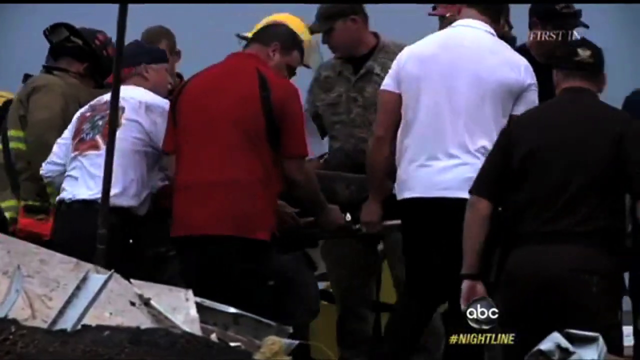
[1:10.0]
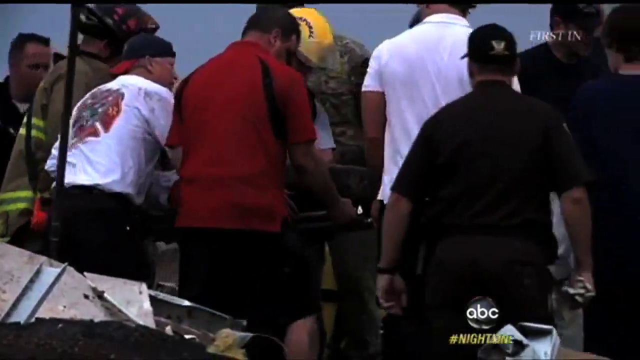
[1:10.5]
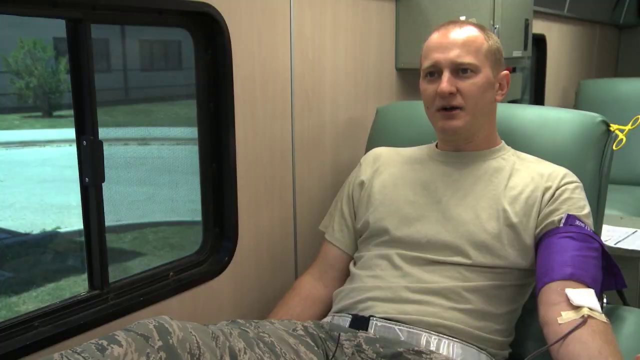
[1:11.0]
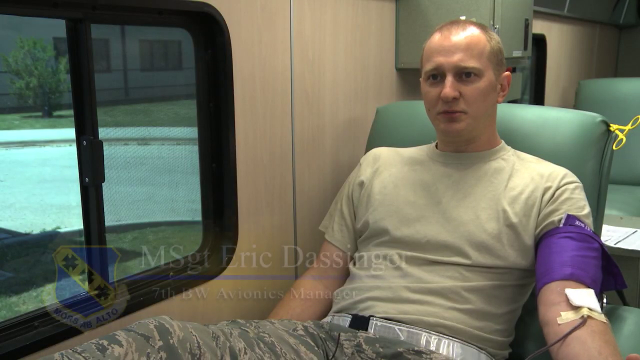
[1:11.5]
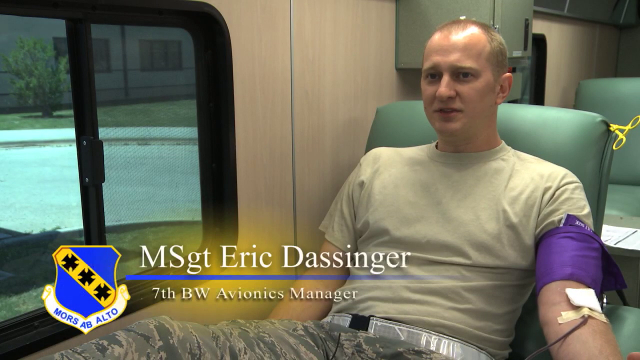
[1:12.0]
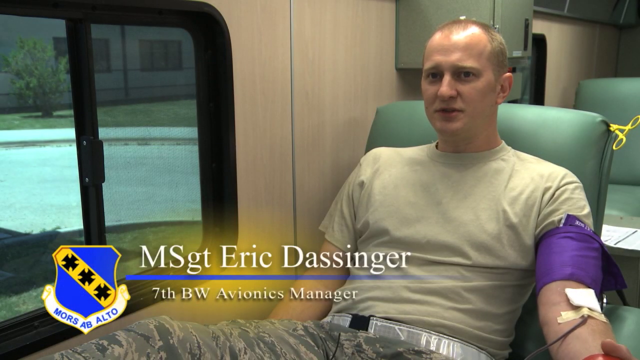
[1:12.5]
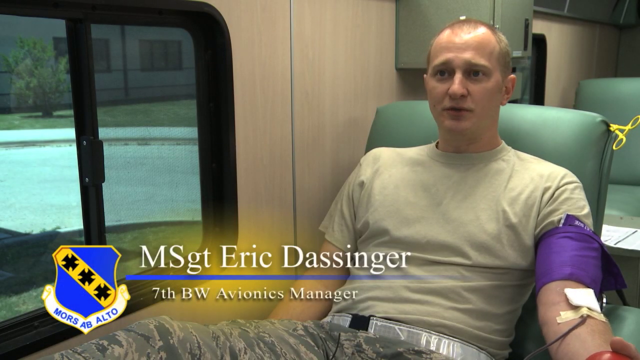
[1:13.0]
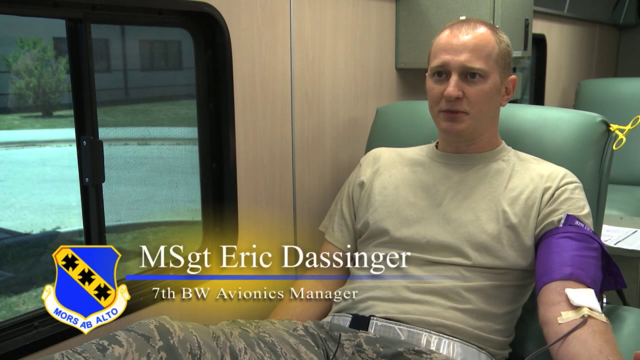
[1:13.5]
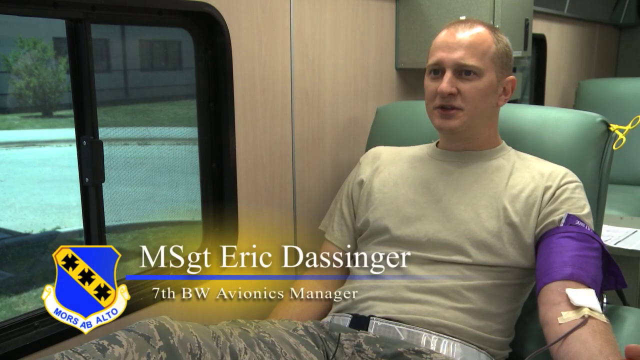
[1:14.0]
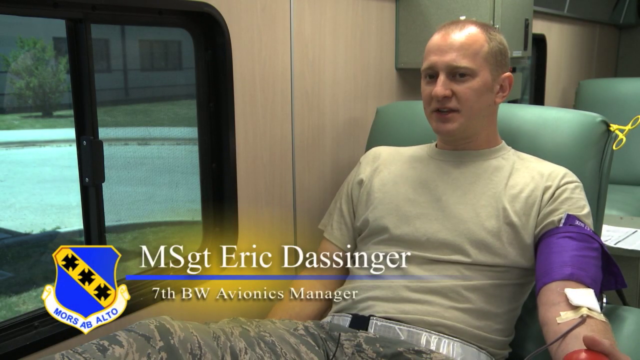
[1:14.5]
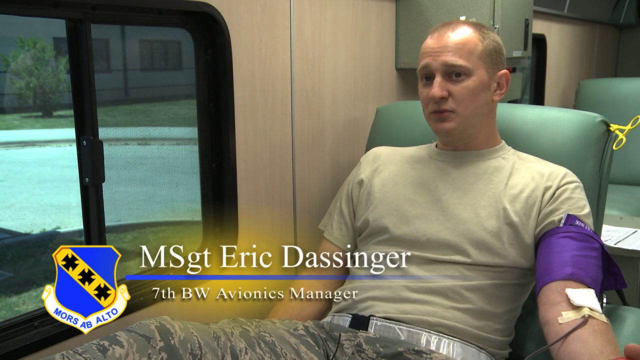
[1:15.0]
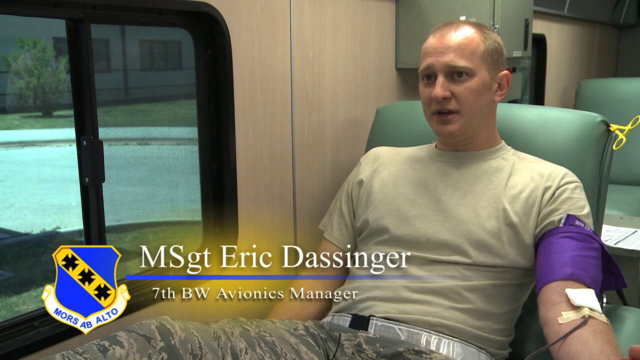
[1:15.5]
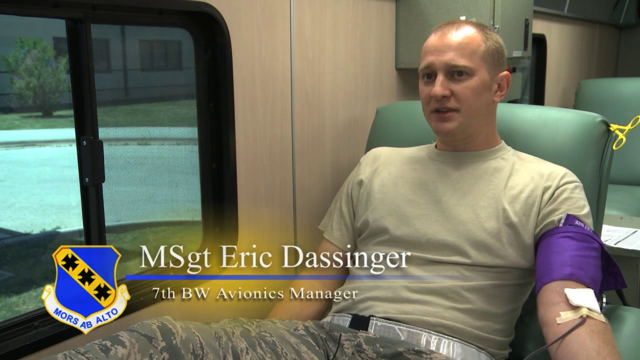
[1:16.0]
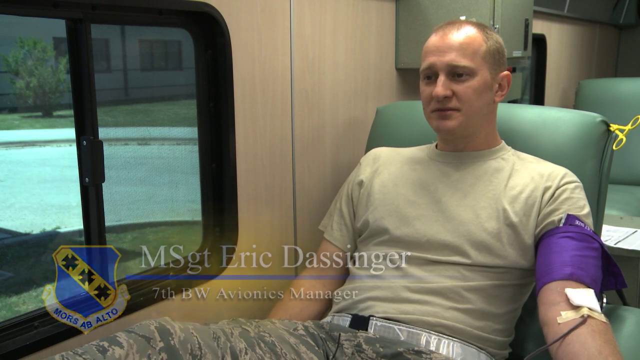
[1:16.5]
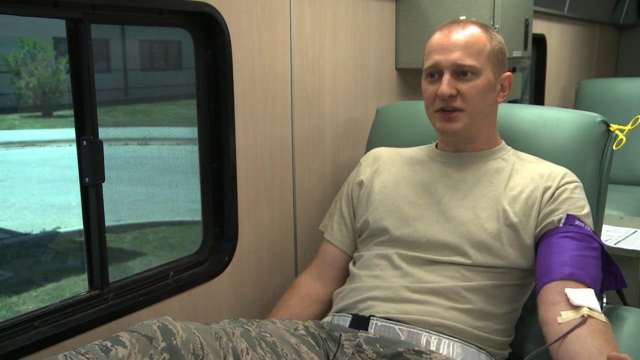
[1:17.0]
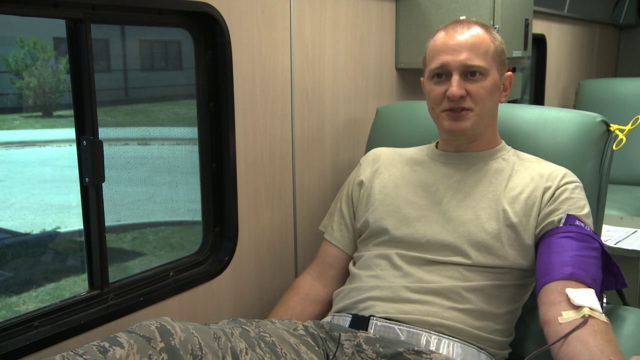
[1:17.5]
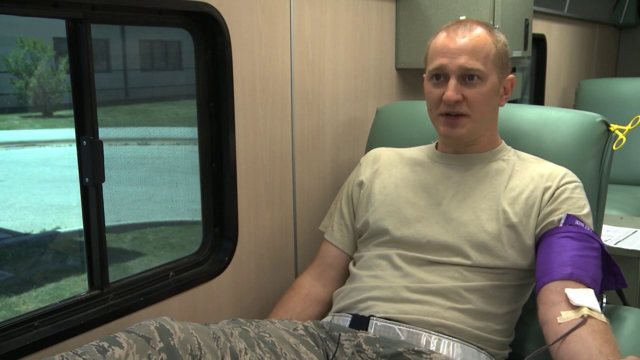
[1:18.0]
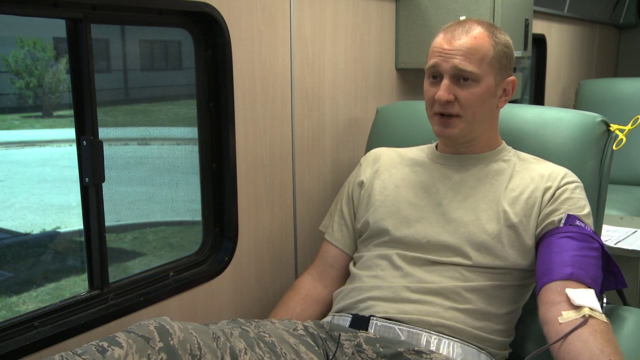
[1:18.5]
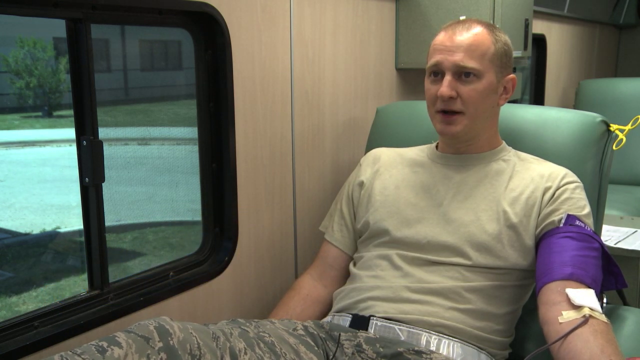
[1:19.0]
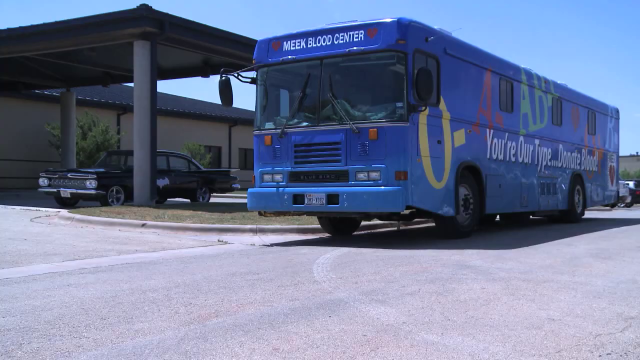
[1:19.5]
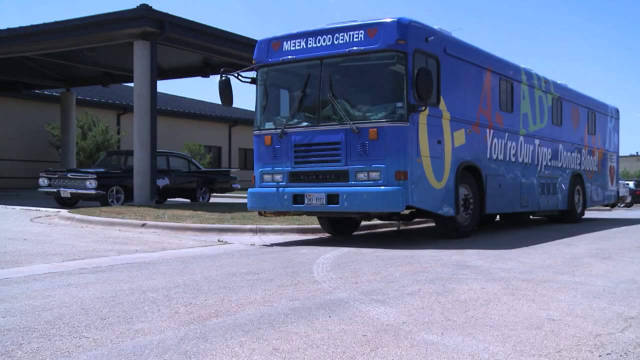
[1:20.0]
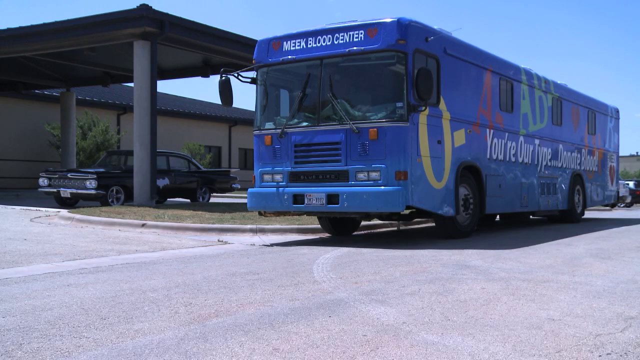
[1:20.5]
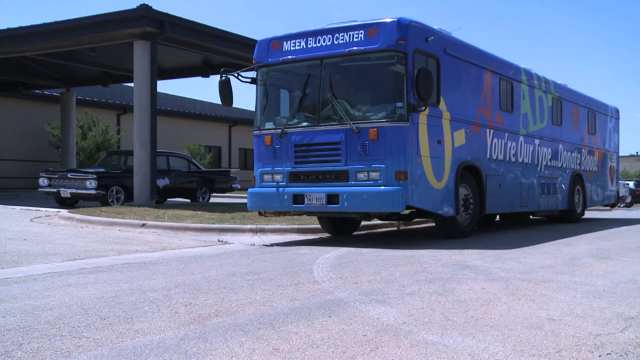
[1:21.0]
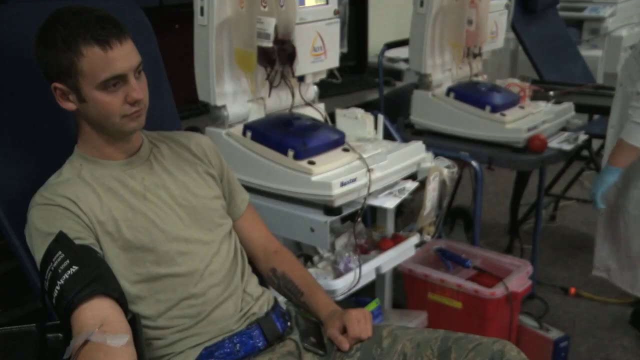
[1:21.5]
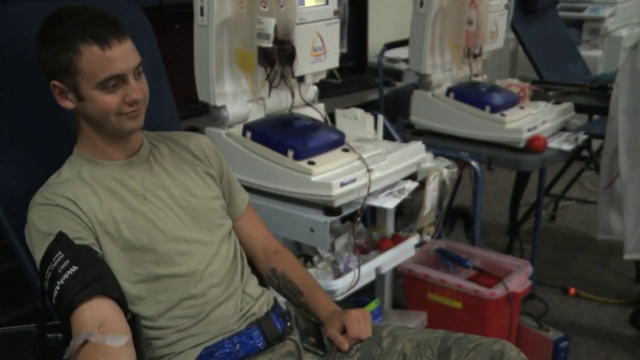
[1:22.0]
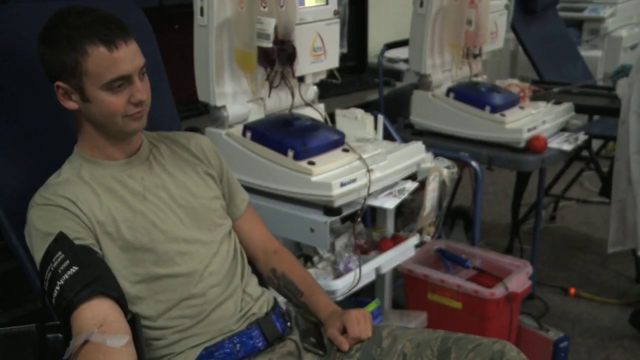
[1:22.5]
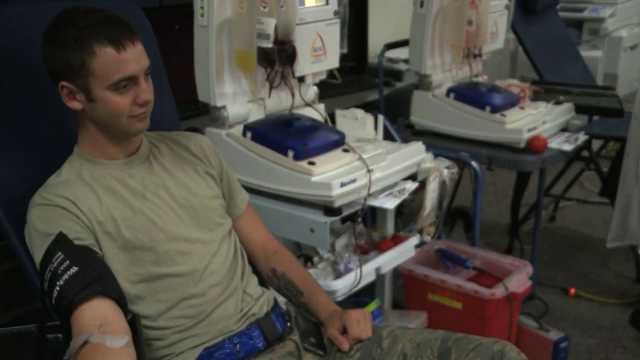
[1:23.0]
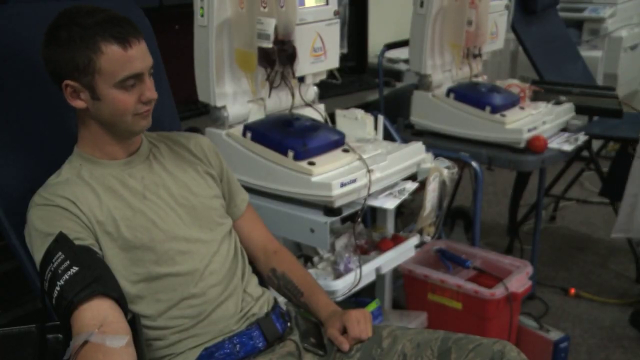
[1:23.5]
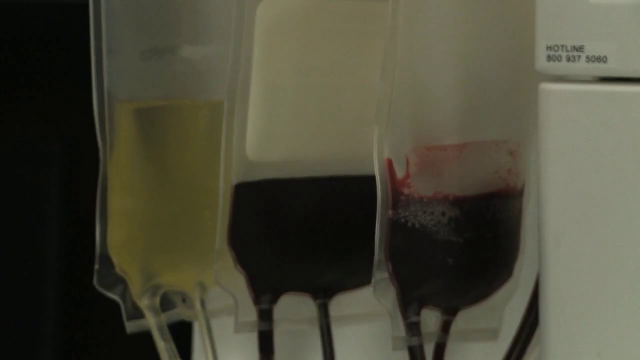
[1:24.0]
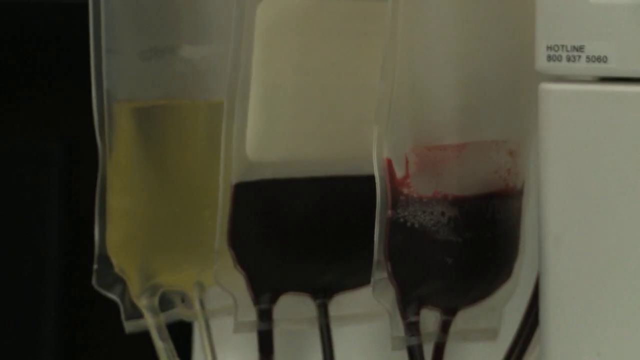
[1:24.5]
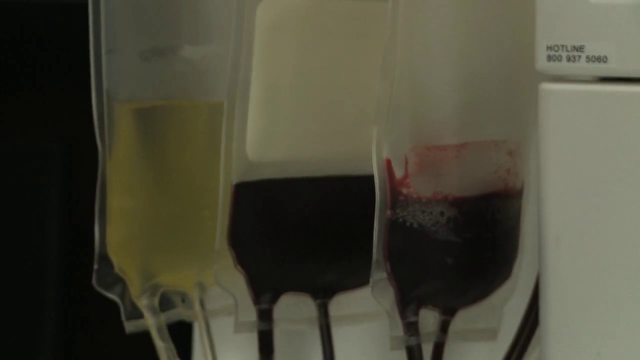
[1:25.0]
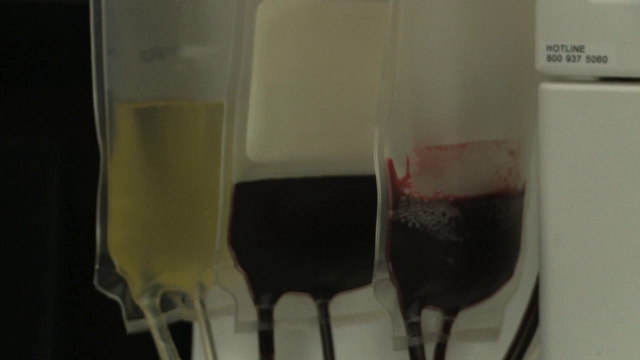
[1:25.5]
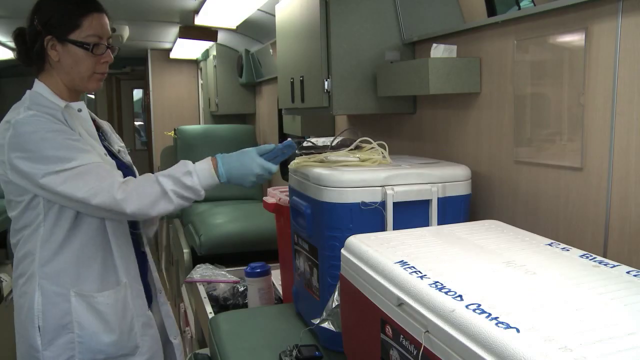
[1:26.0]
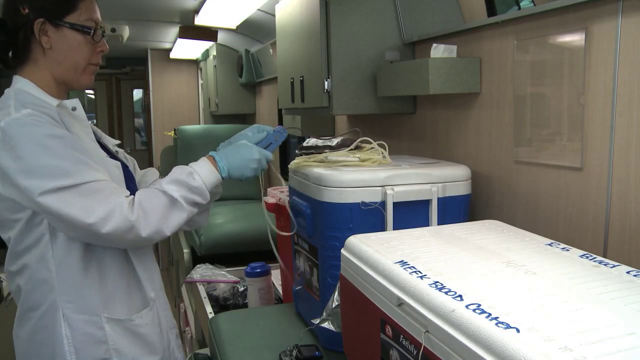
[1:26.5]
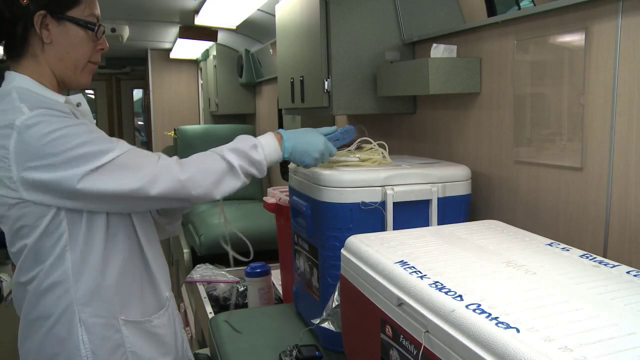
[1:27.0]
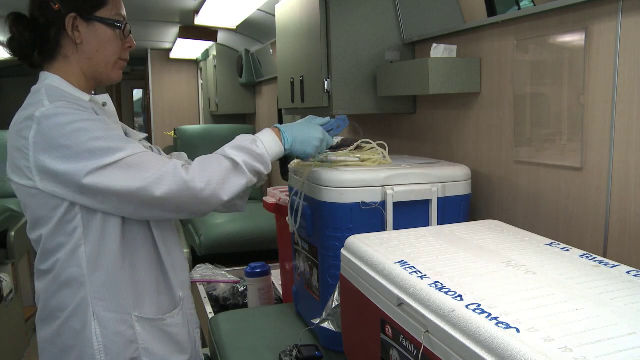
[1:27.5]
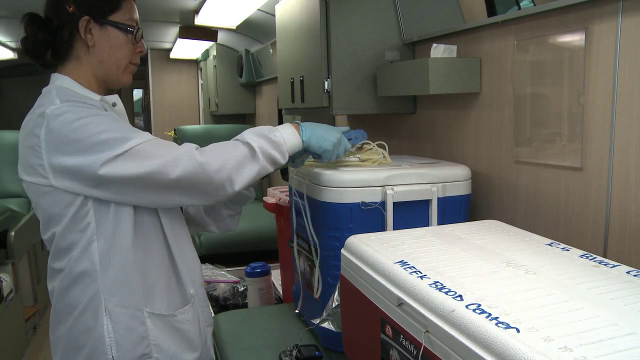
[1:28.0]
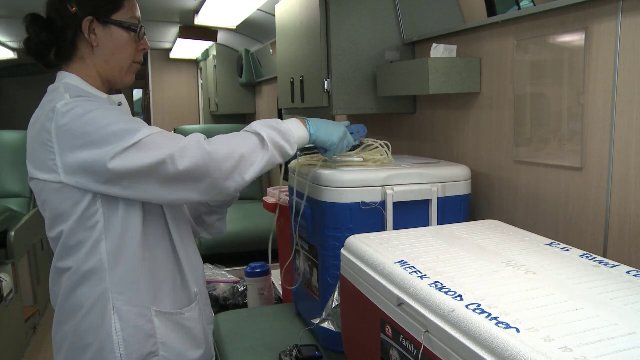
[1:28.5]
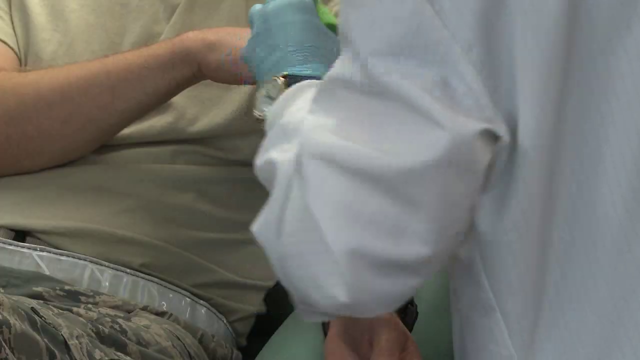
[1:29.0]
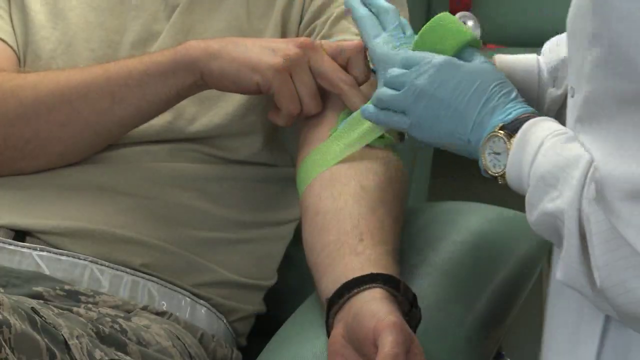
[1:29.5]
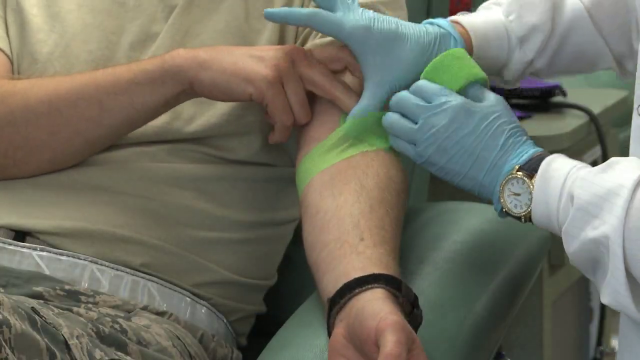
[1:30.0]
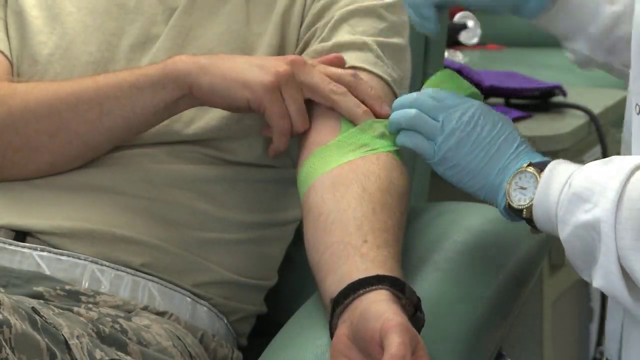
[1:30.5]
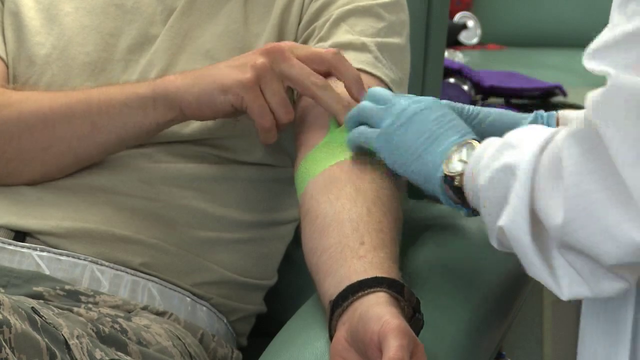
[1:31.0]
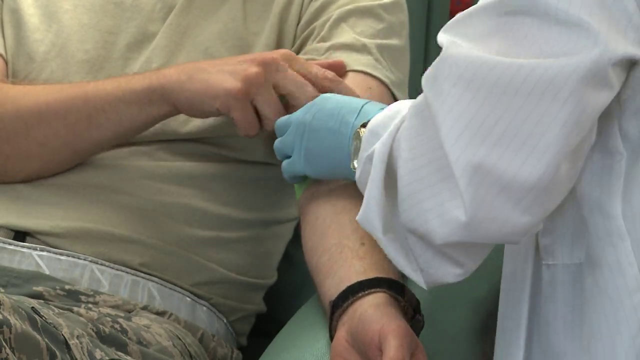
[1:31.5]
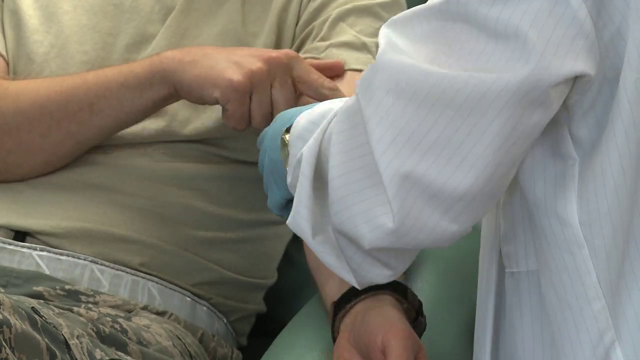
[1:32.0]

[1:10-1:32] Multiple people assist others who are on body stretchers. Soldiers help, recognisable by their uniforms and caps, along with firefighters in brown uniforms with yellow stripes and individuals in red, white and black shirts. Next, MSGT Eric Dasinger, a 7th BW Evonics manager, donates blood from his left arm with a purple blood pressure band on it, holding a red stress ball. He is in military uniform and pants with a light gray top, sitting on a green chair. A purple-blue MEK blood center bus appears, with "you're our type donate blood" written on the side, along with blood type symbols such as O negative, A positive and AB. More soldiers donate blood; some blood bags are still half empty, and nurses close the blood samples and put them in a cooler box. One nurse, with black hair and spectacles with a thick black frame, puts them into a blue cooler box with a white lid.